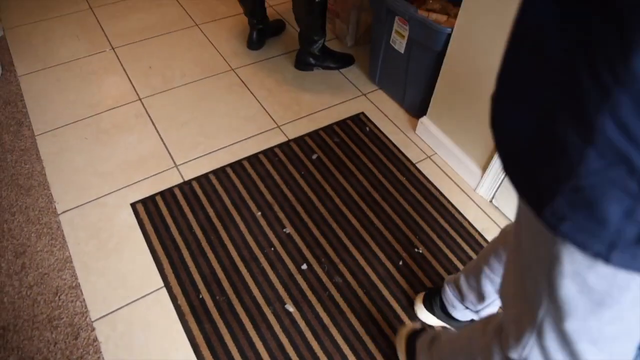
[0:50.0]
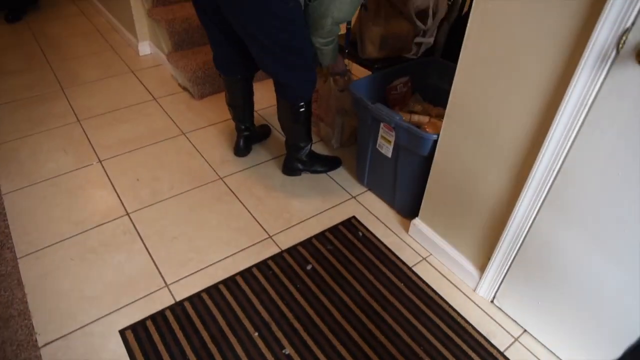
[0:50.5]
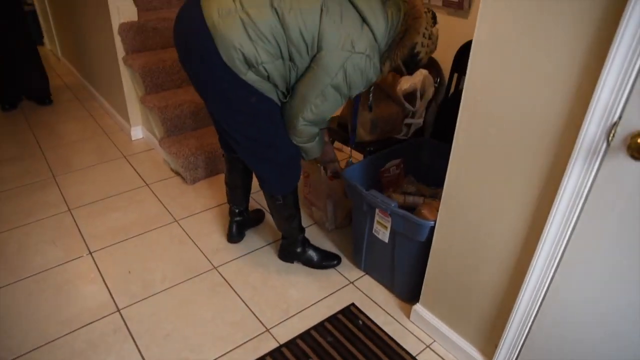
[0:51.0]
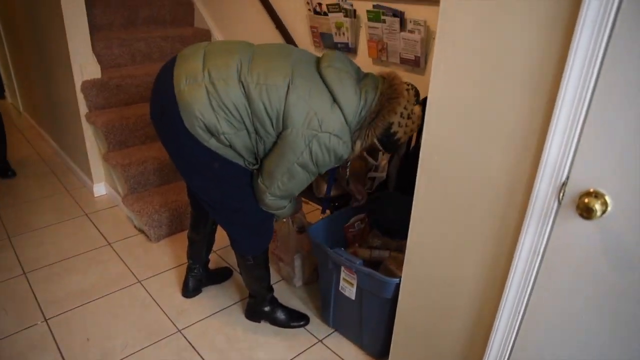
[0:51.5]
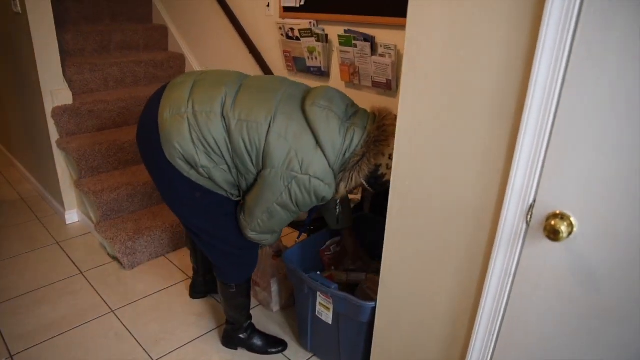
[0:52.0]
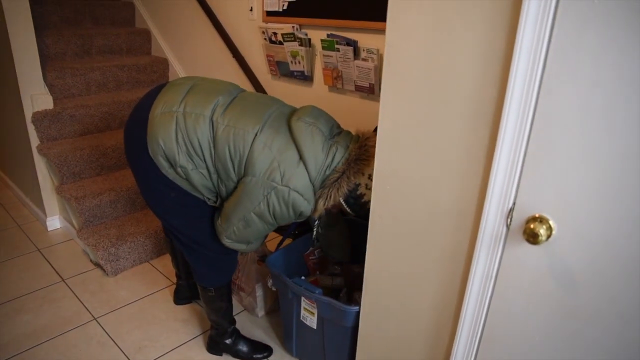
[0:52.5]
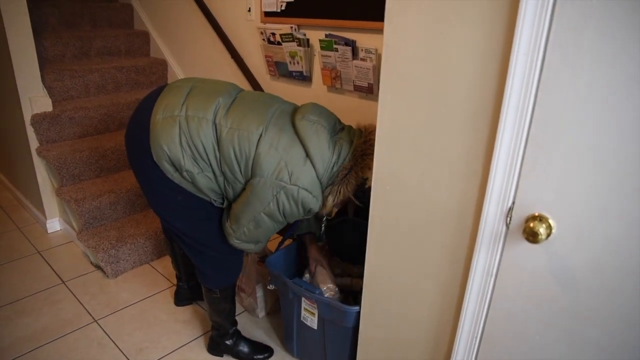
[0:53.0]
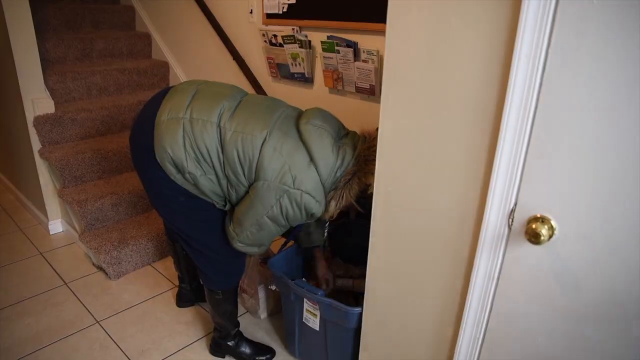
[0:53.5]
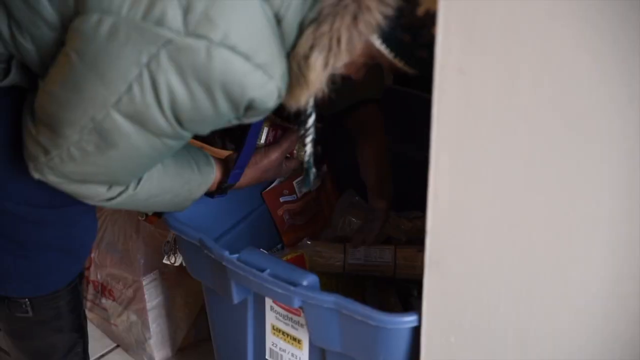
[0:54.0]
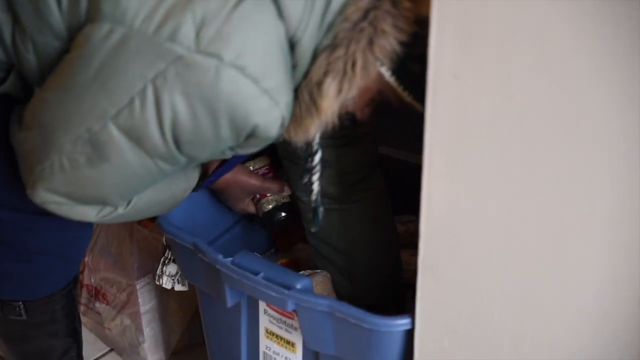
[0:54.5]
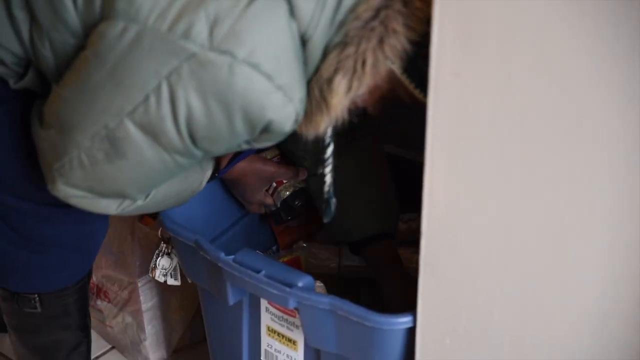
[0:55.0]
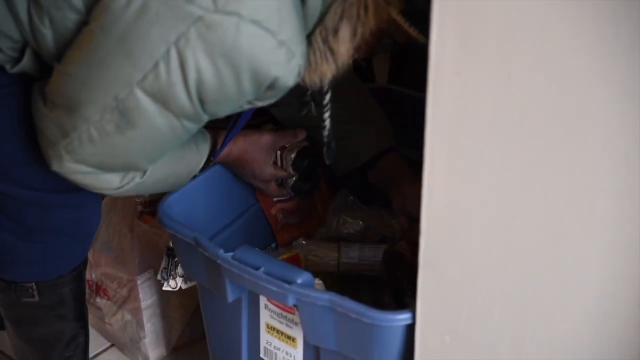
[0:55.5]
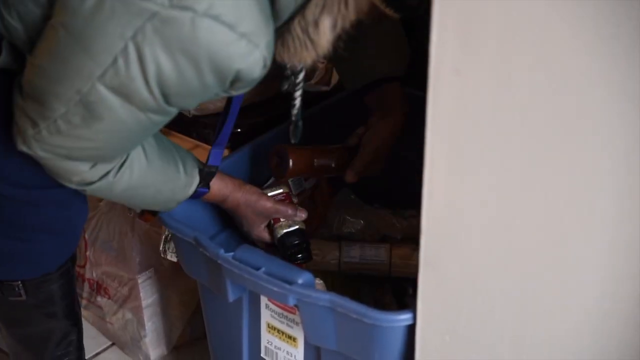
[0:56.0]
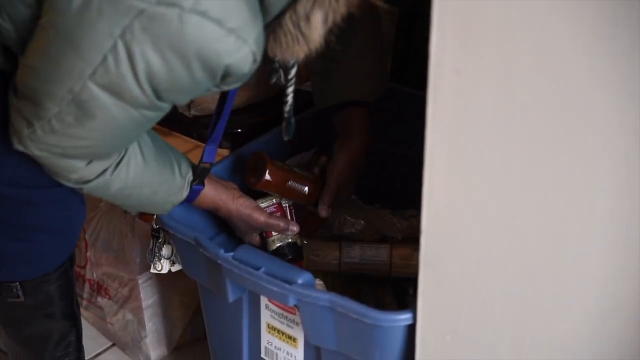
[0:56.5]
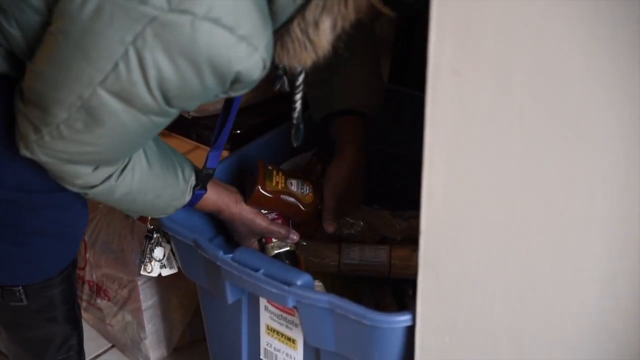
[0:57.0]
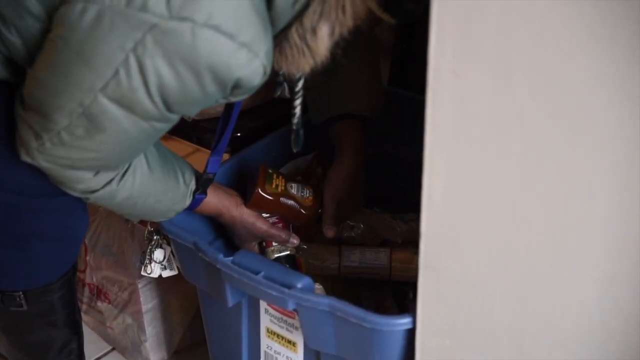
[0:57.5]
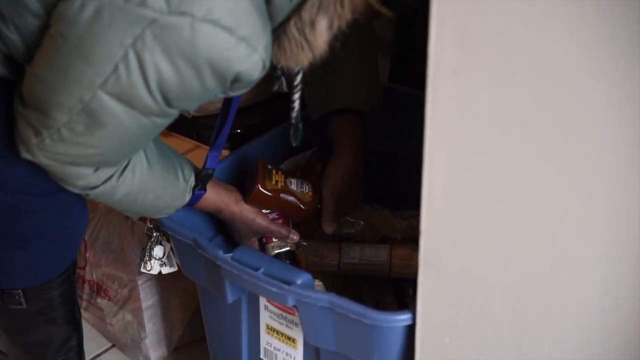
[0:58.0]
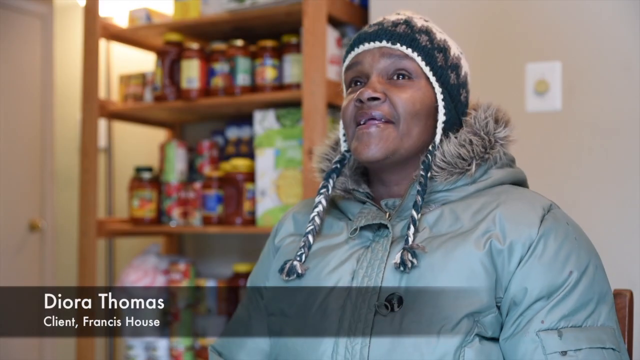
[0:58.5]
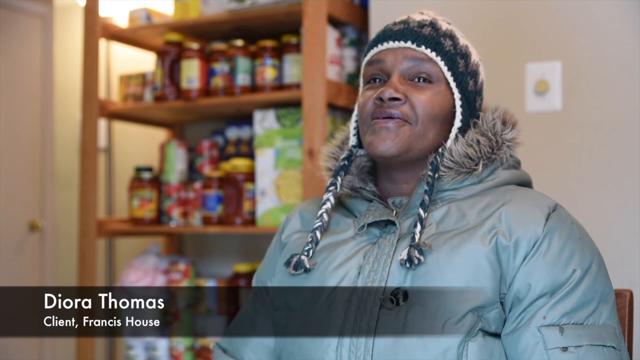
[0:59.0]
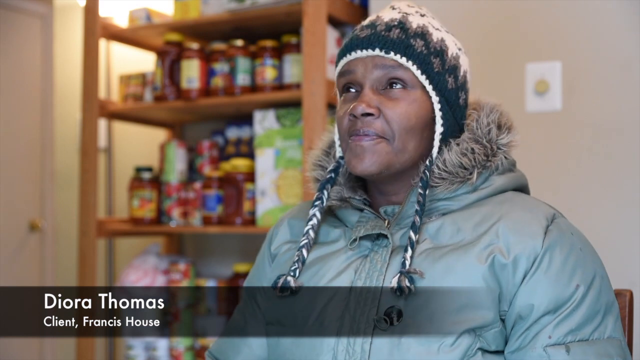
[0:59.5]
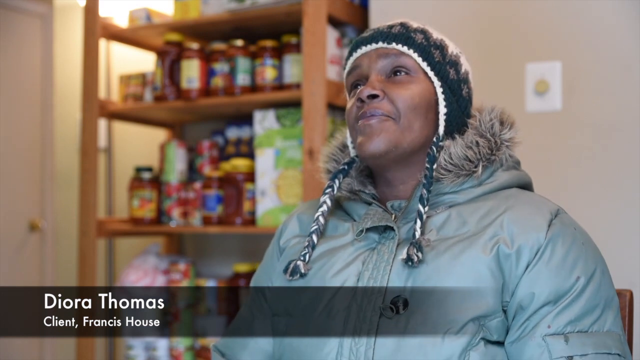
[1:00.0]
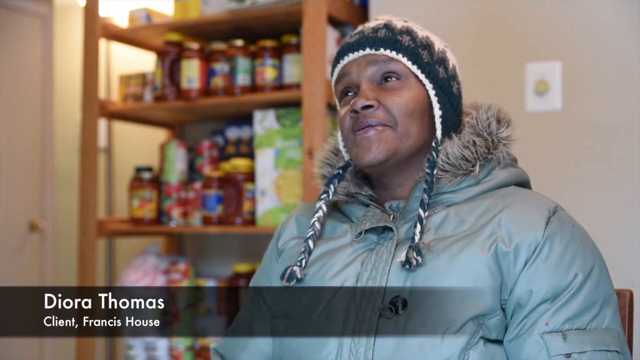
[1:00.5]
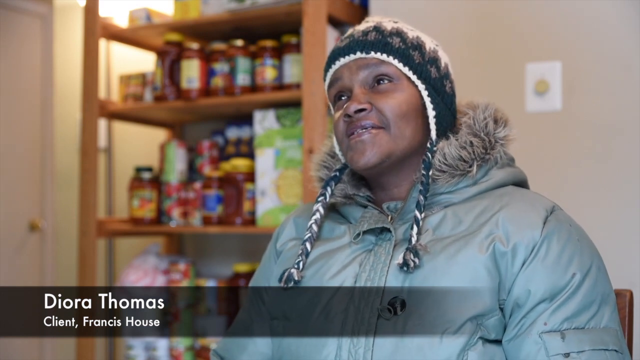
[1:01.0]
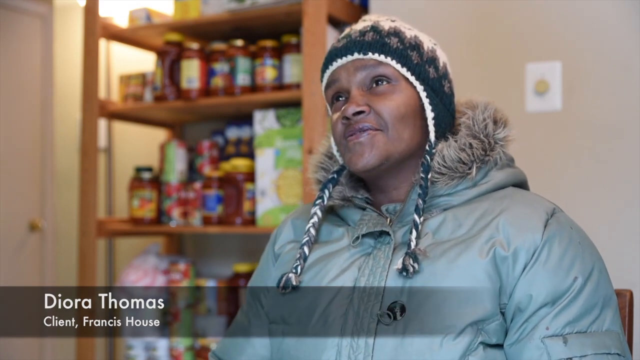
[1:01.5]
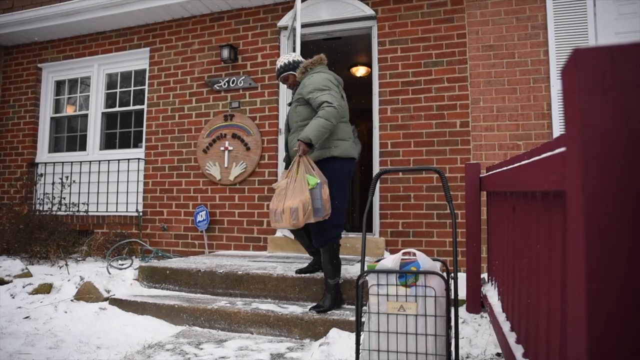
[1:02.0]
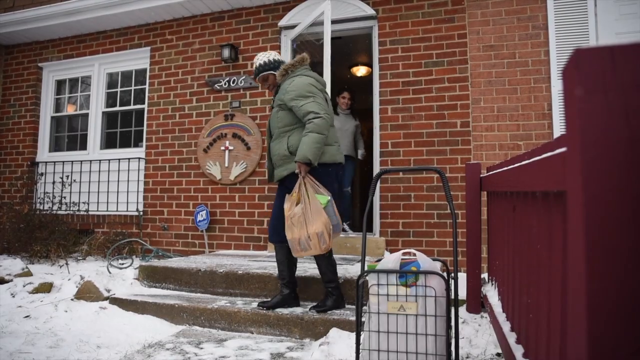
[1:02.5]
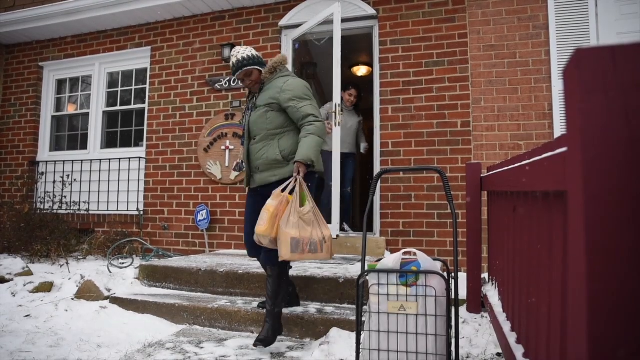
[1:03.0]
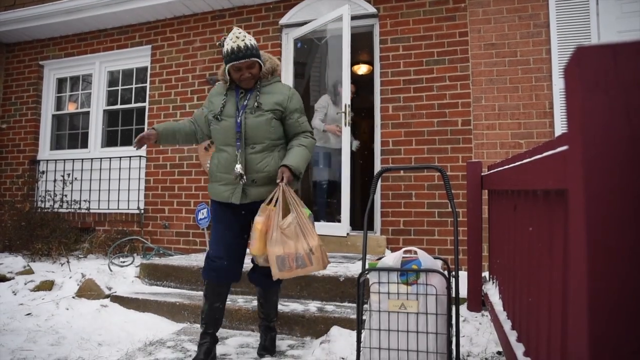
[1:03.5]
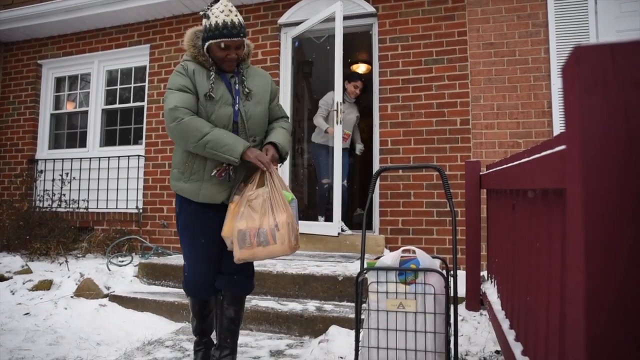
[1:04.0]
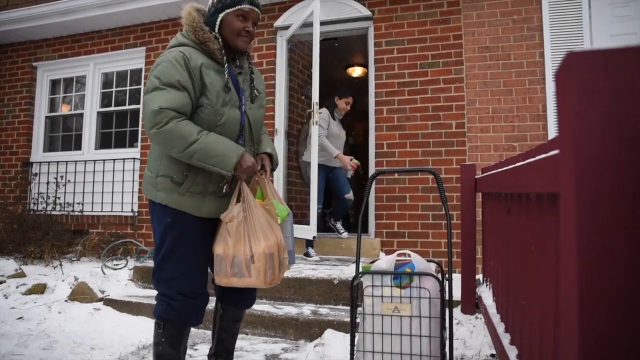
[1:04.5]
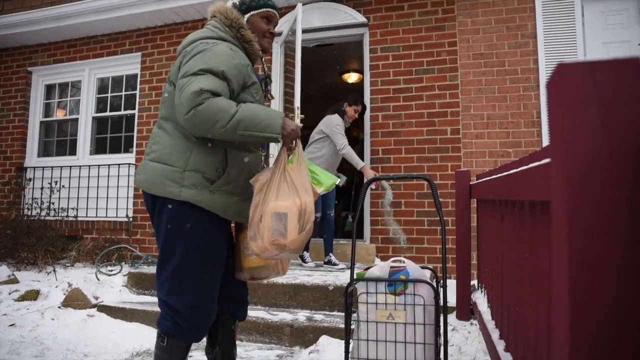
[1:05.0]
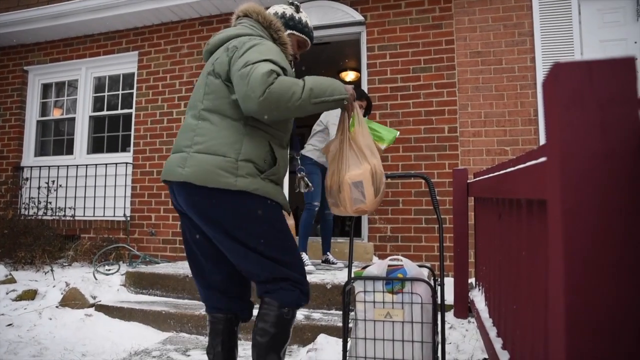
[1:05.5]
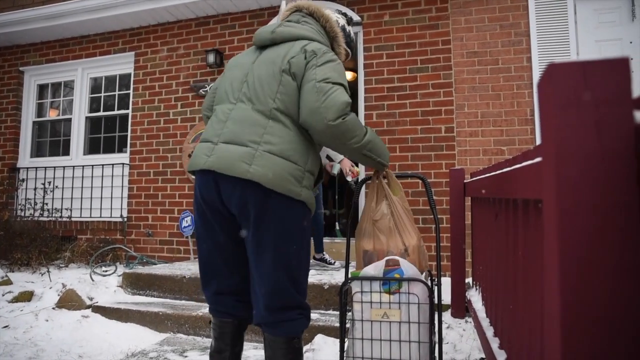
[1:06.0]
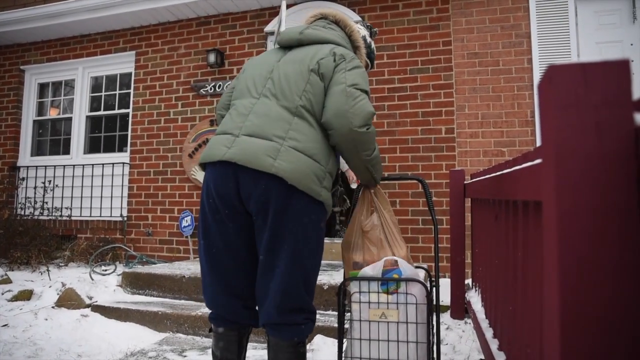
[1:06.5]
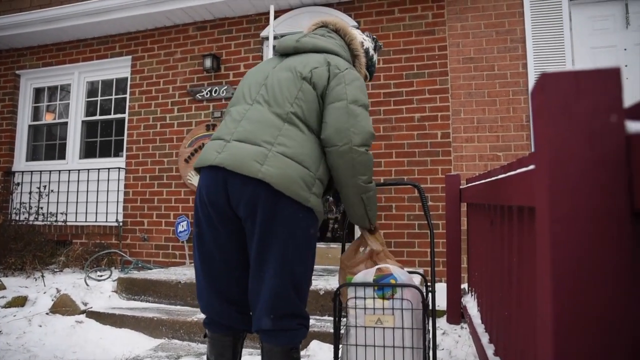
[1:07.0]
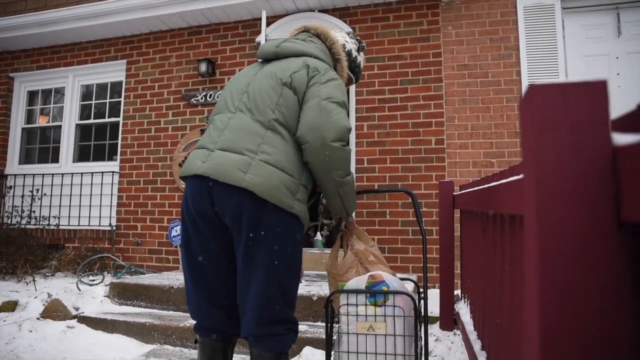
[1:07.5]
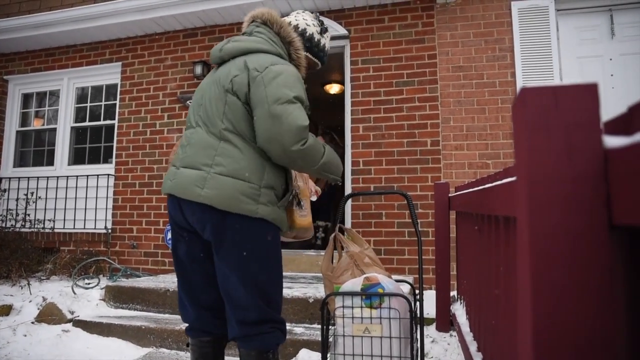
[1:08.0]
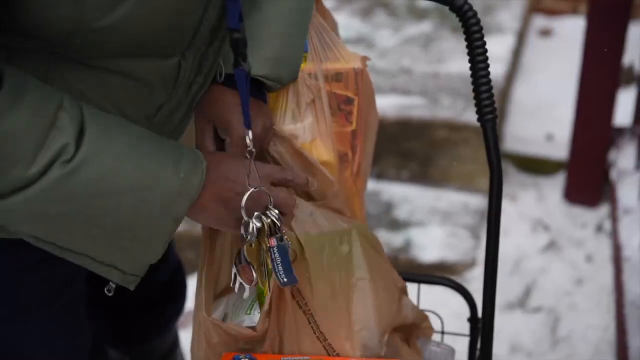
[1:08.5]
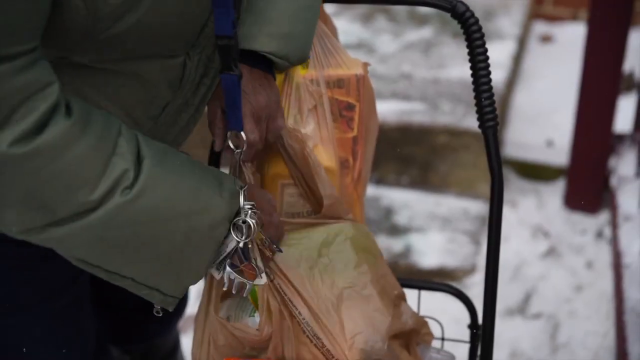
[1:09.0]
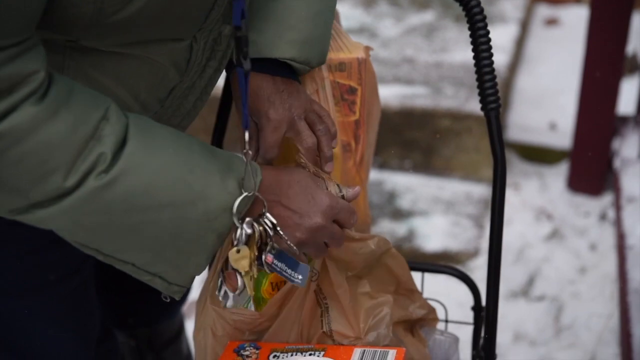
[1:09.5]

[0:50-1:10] A lady searches for items; she raises ketchup, the inside of the bowl looks dark, and she struggles to see what she is doing. A Black woman wearing a sweater speaks to the camera. Her name is Diora Thomas, and she is a client at Francis House who came to shop. She leaves the building carrying what she has shopped for. Behind her another woman, also leaving the building, sprinkles things on the floor and tries to wash the floor. The place looks like a shopping house, more like a supermarket, with lots of products and lots of customers who come to shop.